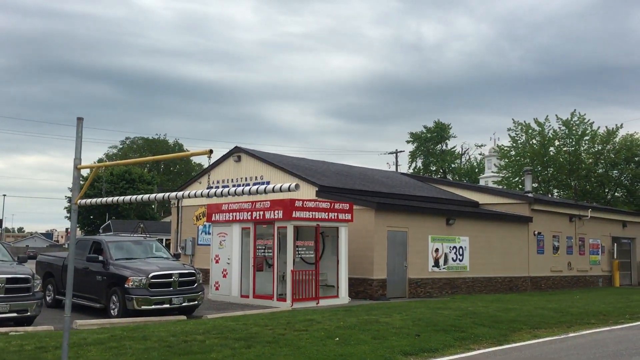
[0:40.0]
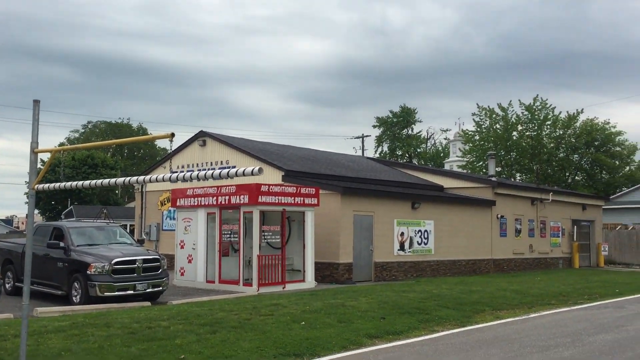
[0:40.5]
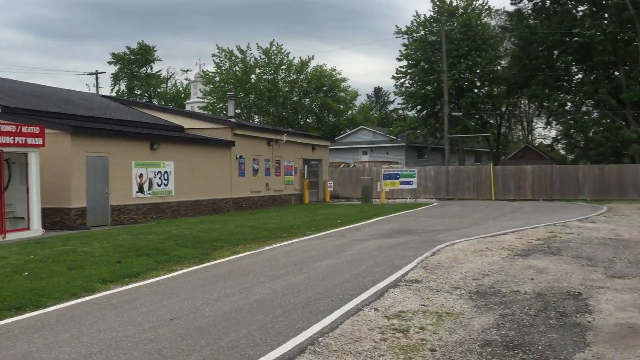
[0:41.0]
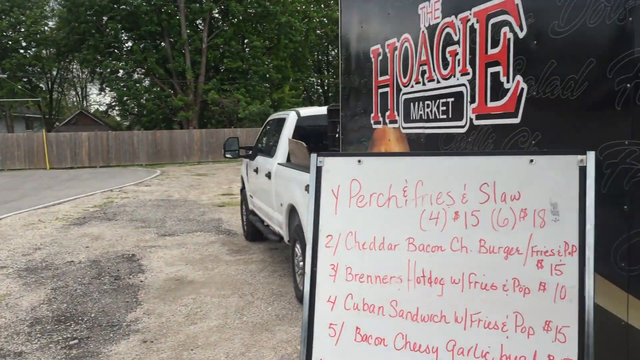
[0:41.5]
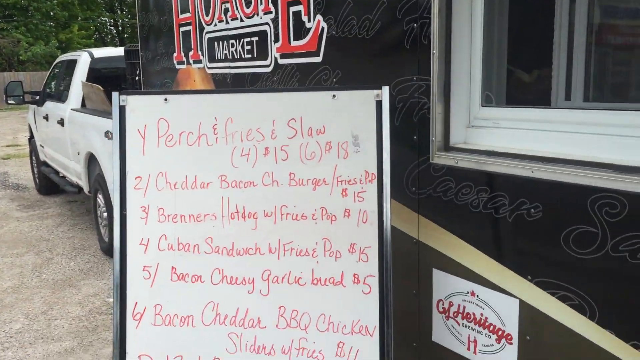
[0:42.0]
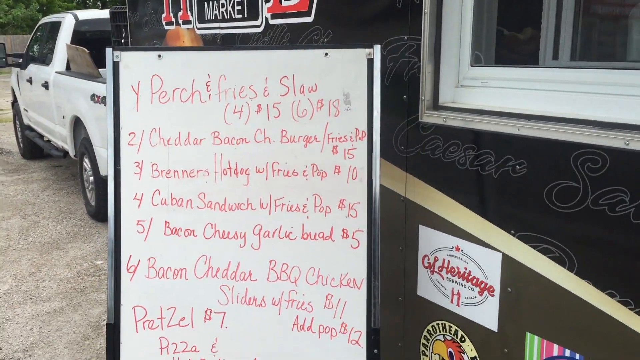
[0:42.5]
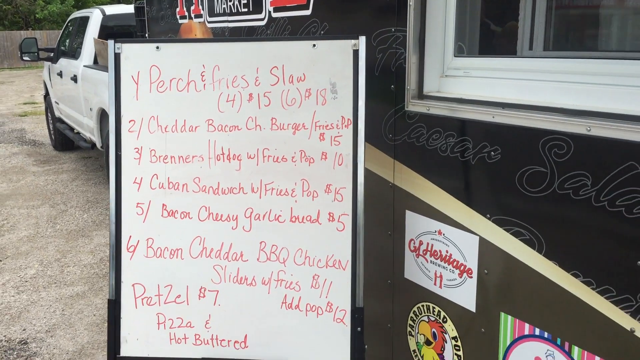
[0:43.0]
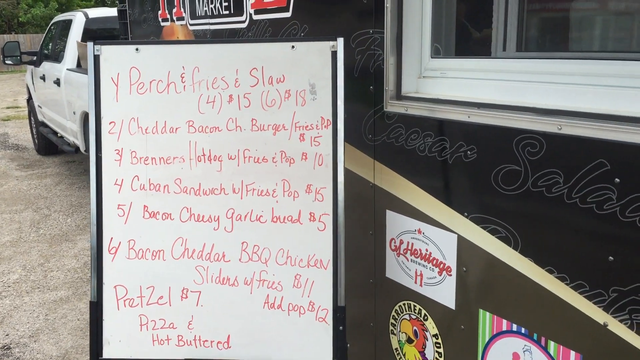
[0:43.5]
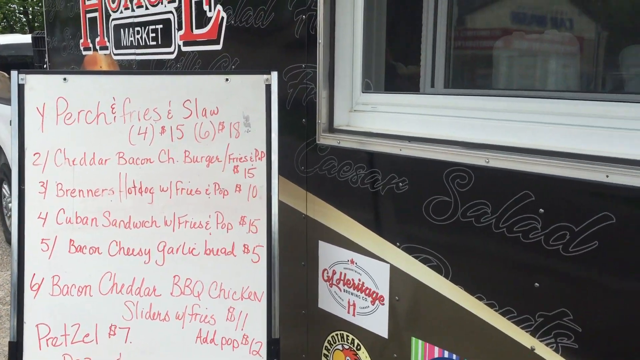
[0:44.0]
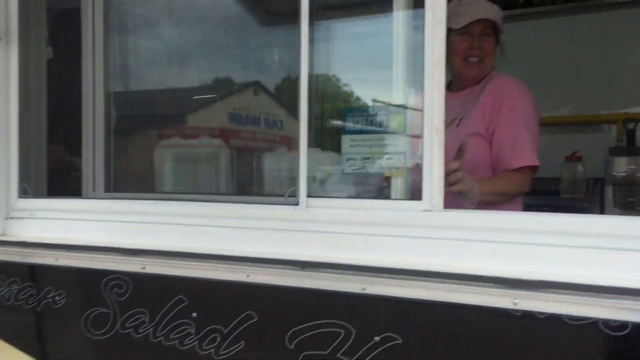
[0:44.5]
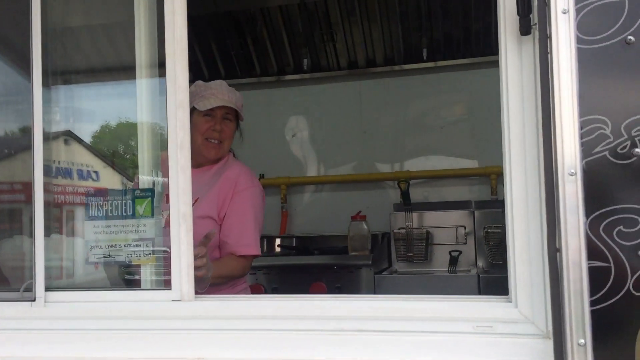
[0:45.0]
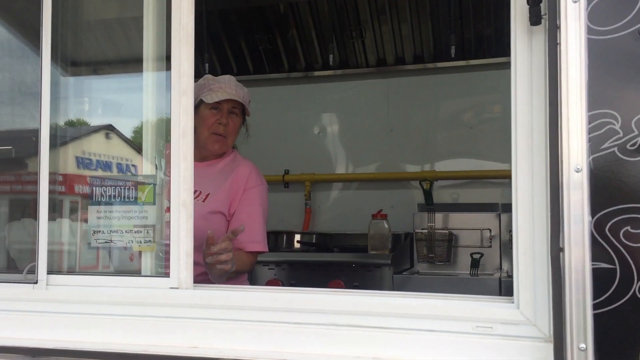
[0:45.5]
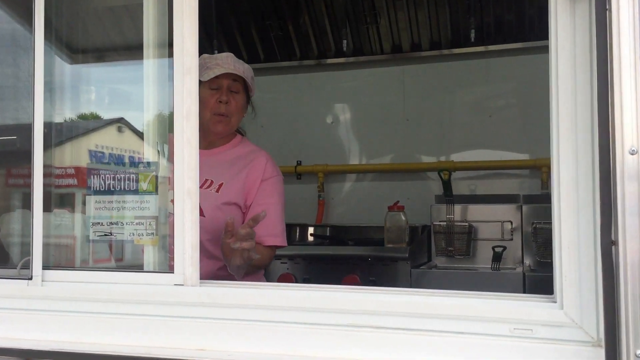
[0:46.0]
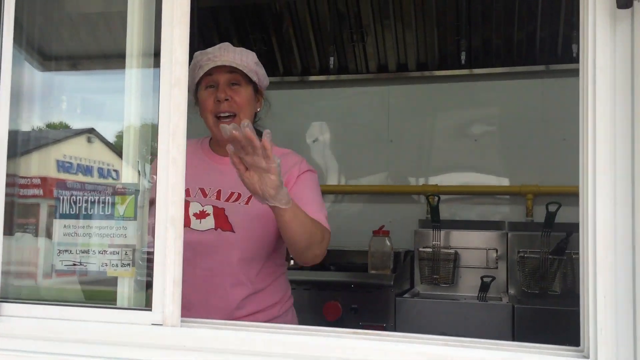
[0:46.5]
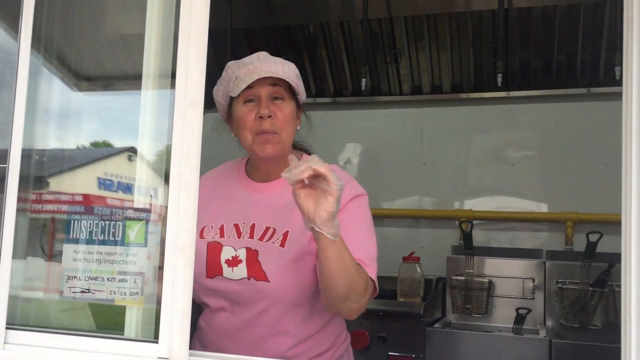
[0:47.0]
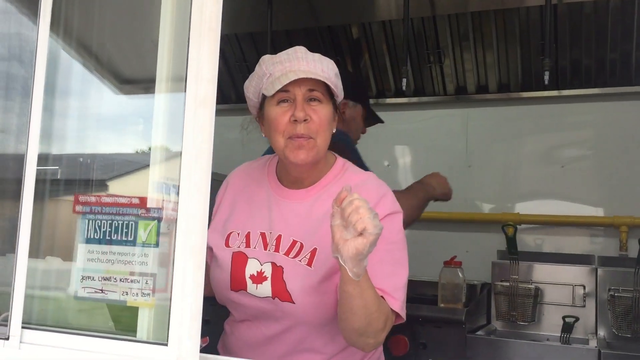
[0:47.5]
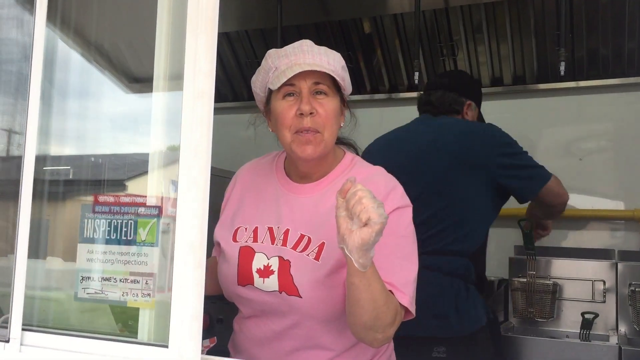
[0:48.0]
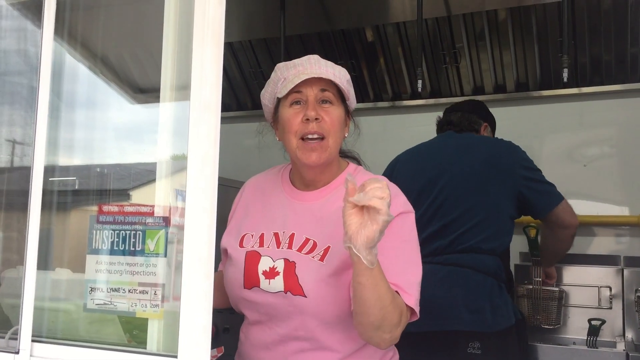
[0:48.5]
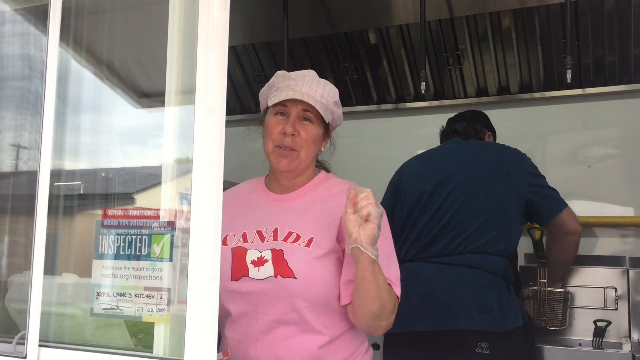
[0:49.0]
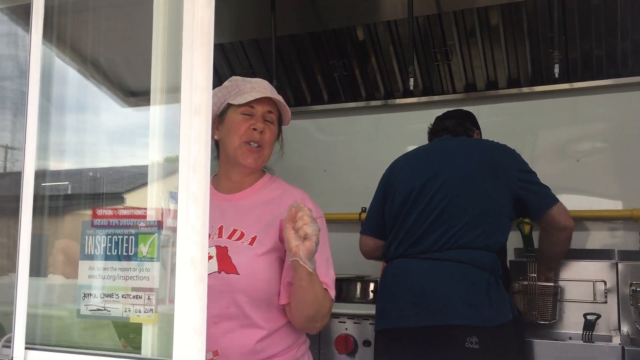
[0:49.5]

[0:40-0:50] The trailer for Joyful Lynne's Kitchen has its name written in white and has pictures attached to it, including a salad in a white bowl with some sauce on top, buns, and sandwiches. There is a very big window on the trailer. Inside, a white woman wearing a pink t-shirt and a cap waves, and a man wearing a navy blue t-shirt, a black apron and a black cap holds a big silver-colored barrel and seems to be mixing things. Both are very busy in the kitchen. Outside, there is a flag and a menu written in red, including a cheddar bacon bagel, bacon cheddar barbecue chicken, pretzels for seven dollars, and some pita. The caravan is attached to a white four-by-four vehicle parked in the street. The camera moves to the left, showing a house with cars parked outside it, then returns to the window, where the woman, wearing a plastic glove, seems to be talking to a customer through the window.